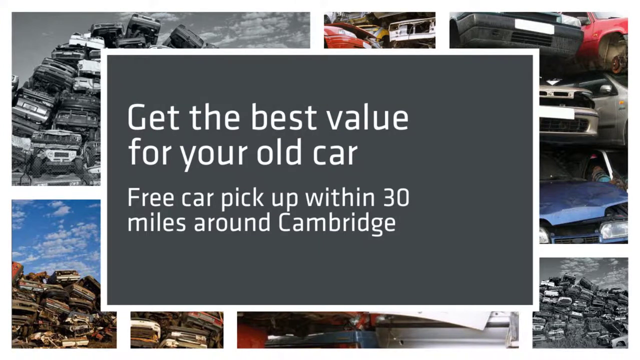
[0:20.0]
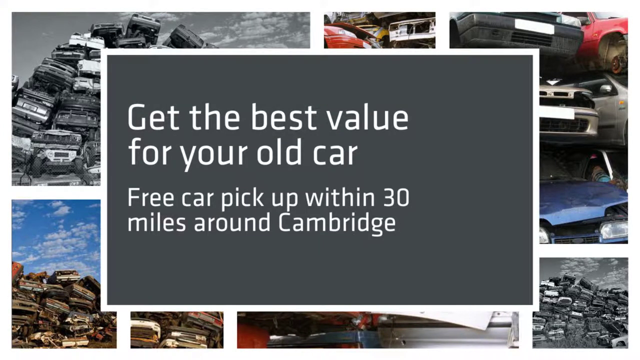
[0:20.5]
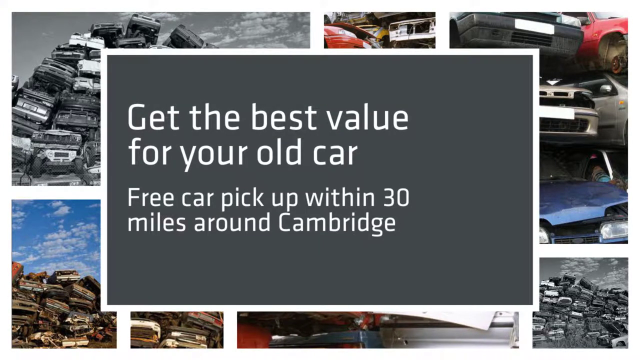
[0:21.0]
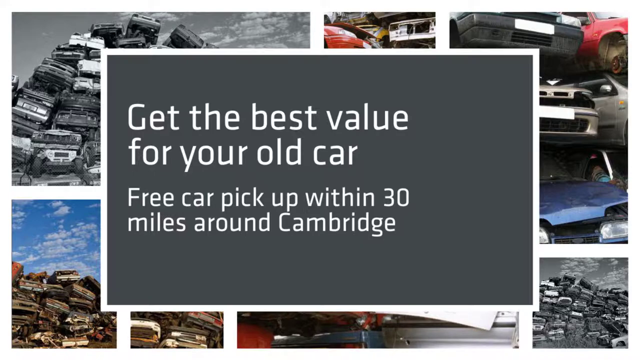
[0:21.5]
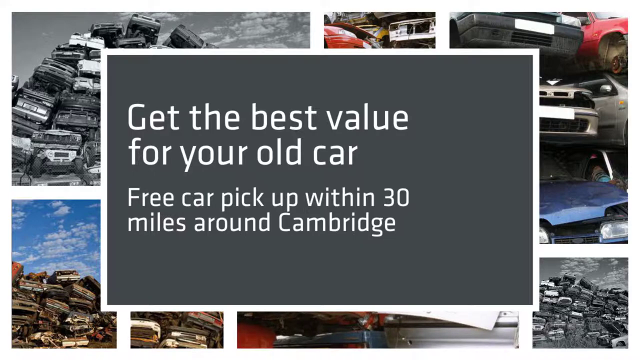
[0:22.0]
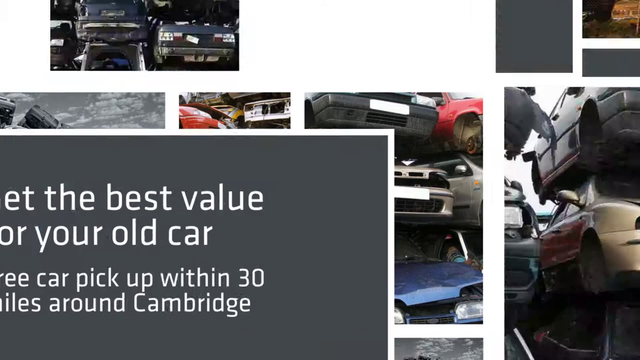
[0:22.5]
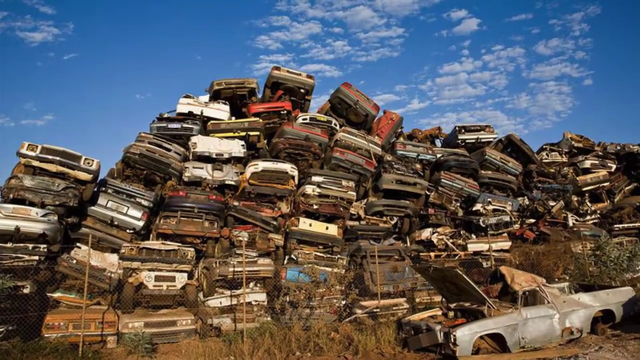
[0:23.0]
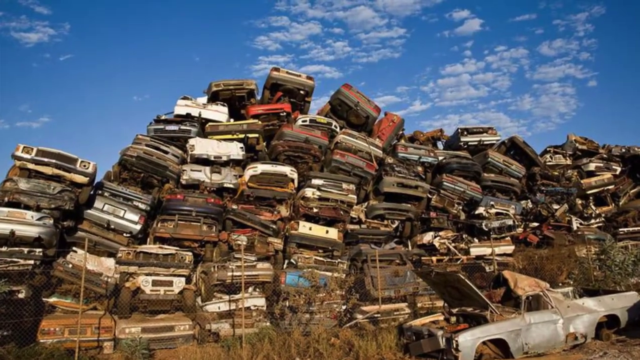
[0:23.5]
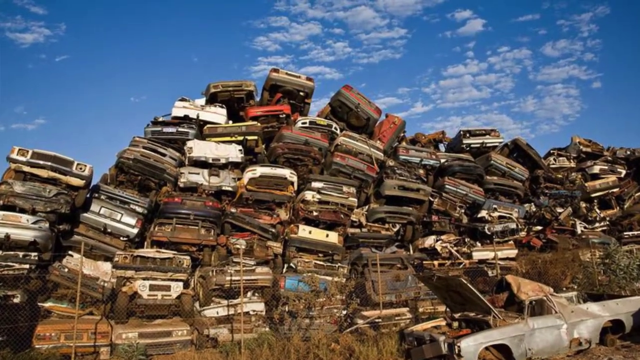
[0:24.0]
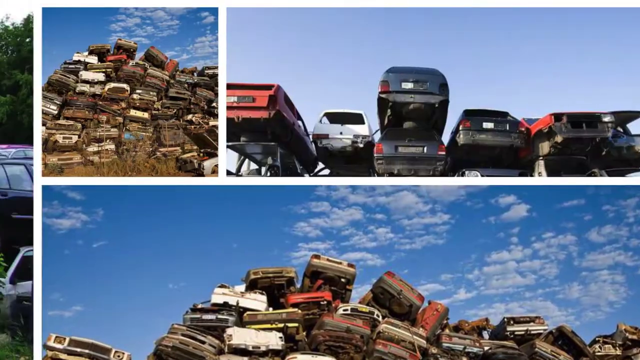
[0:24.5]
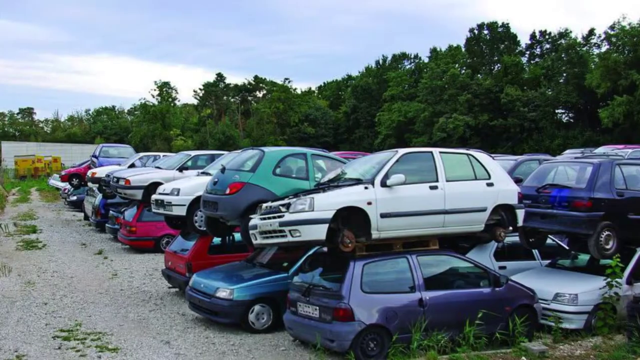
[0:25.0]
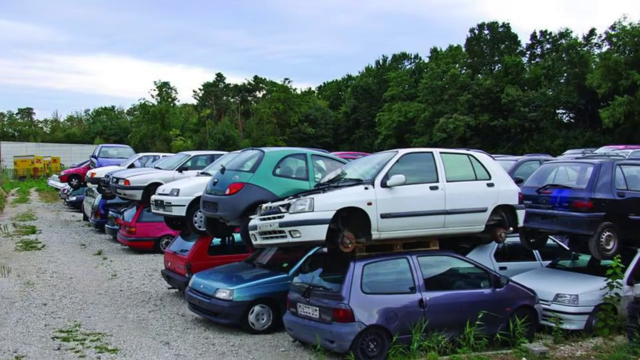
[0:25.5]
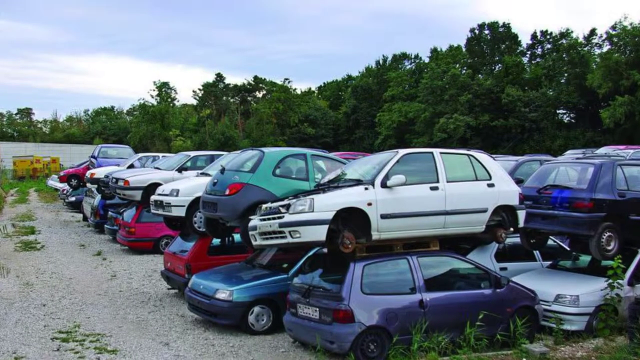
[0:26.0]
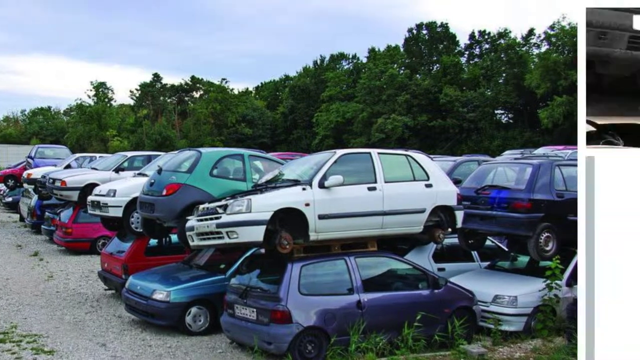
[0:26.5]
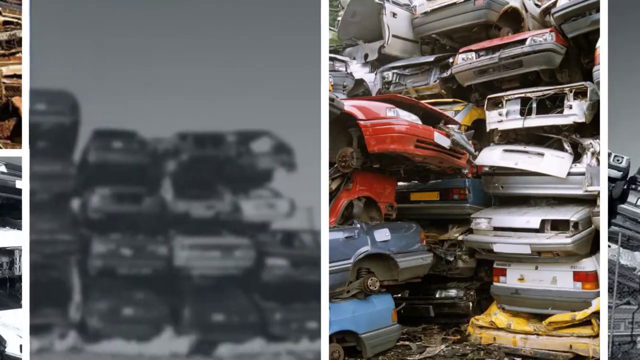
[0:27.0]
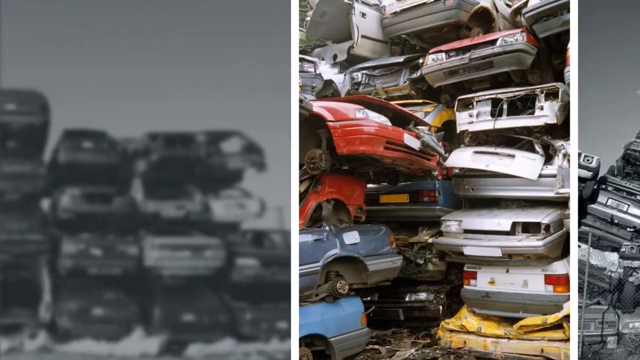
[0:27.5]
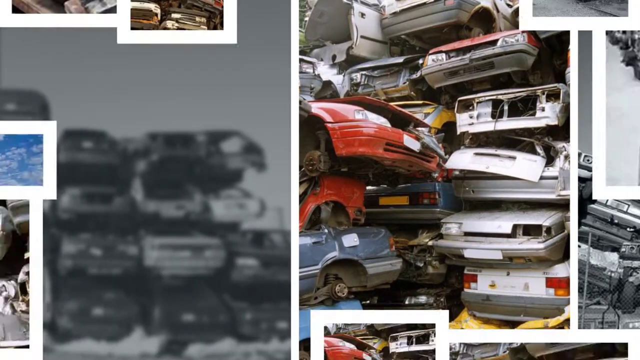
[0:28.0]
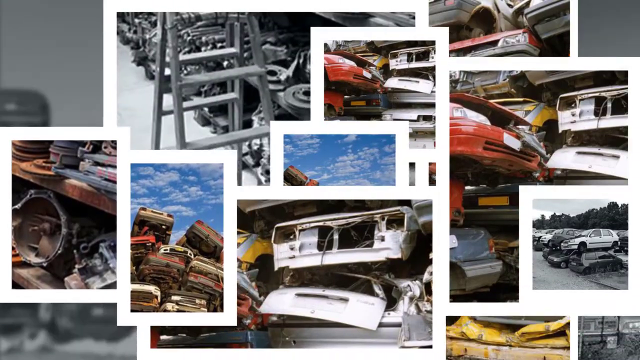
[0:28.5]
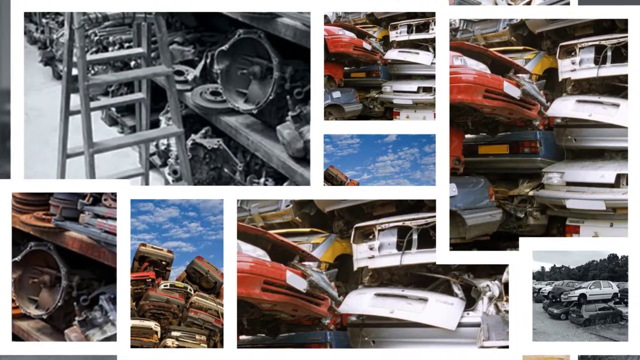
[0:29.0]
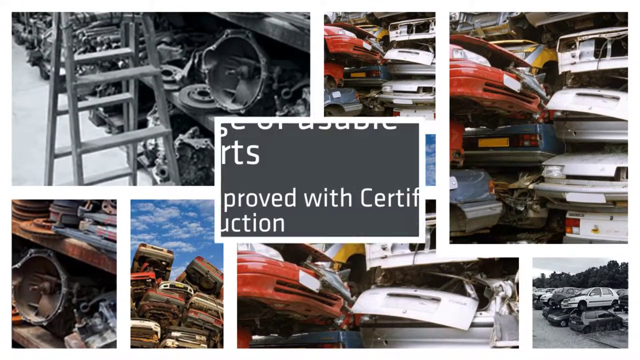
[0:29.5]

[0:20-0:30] Multiple pictures show old cars stacked almost in mountains, packed up and on top of each other. Text refers to getting the best value for an old car. The video moves through picture after picture of lots of old cars in many different colors, including blue, red, beige and white.